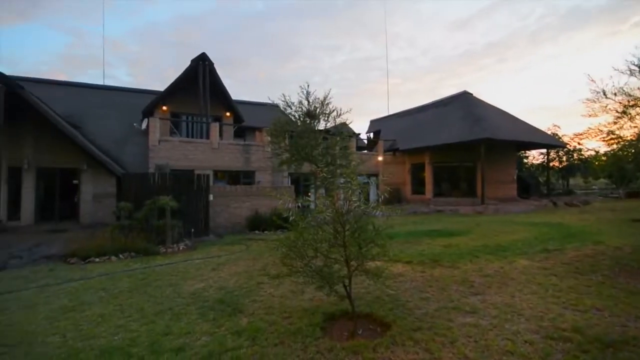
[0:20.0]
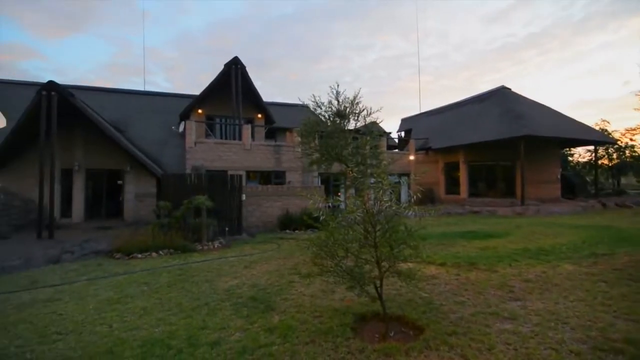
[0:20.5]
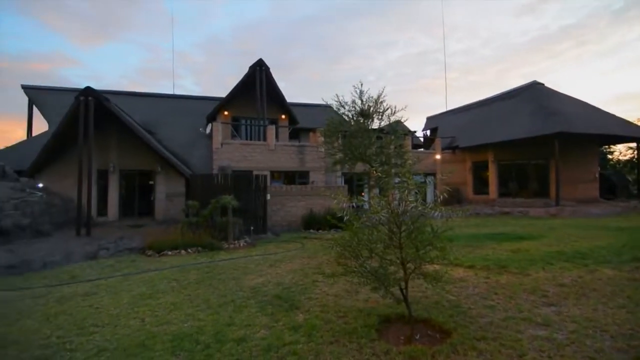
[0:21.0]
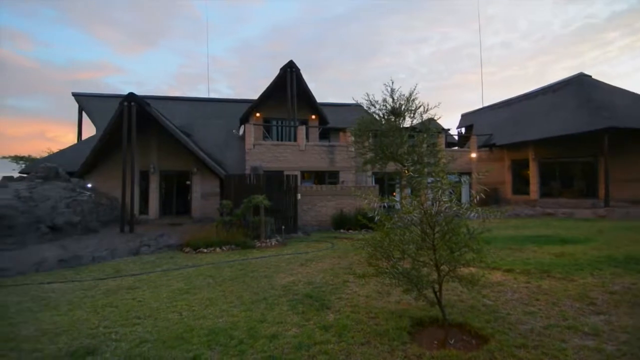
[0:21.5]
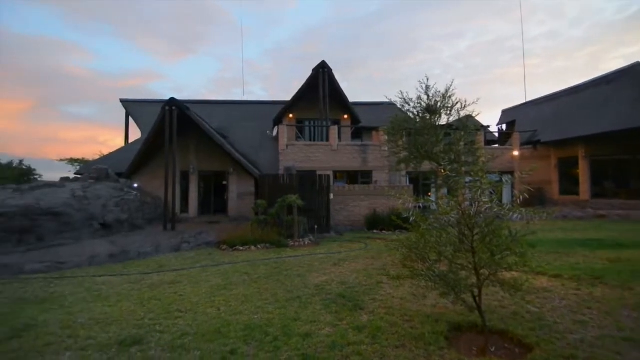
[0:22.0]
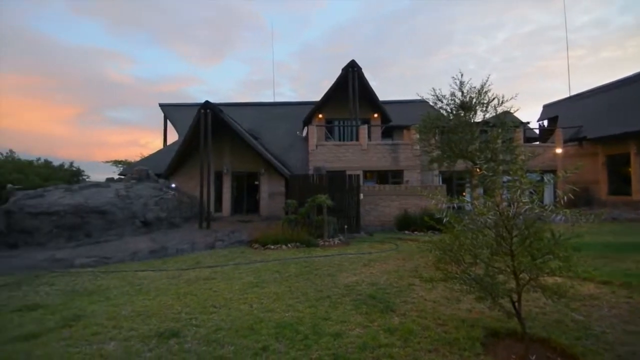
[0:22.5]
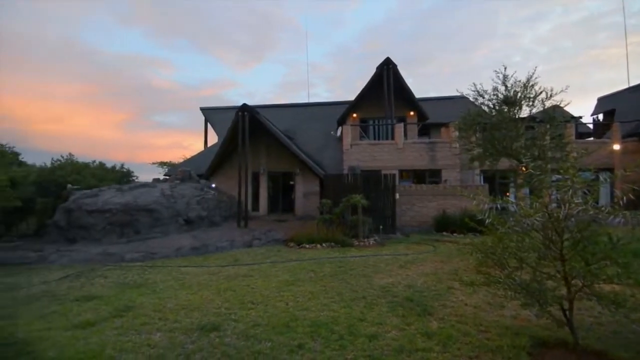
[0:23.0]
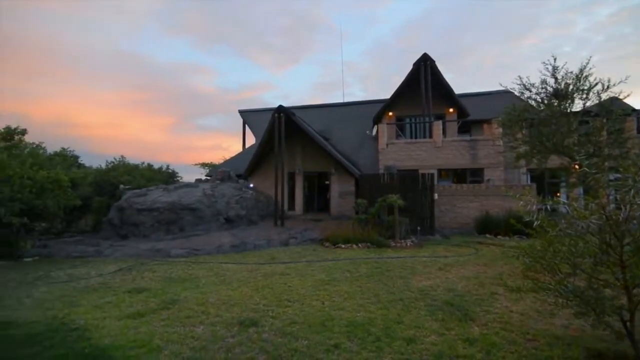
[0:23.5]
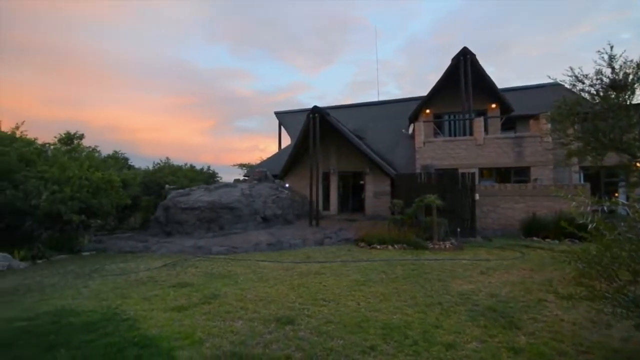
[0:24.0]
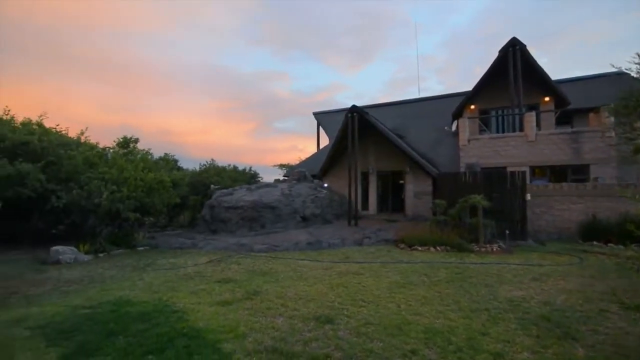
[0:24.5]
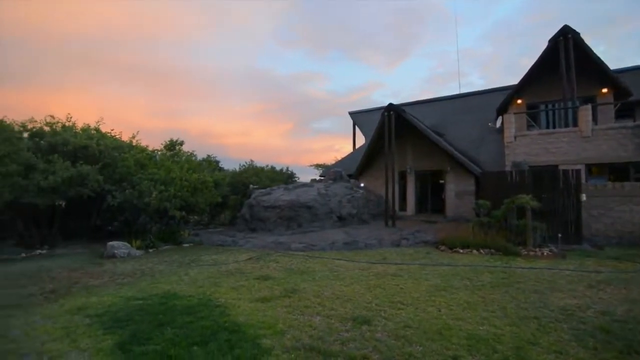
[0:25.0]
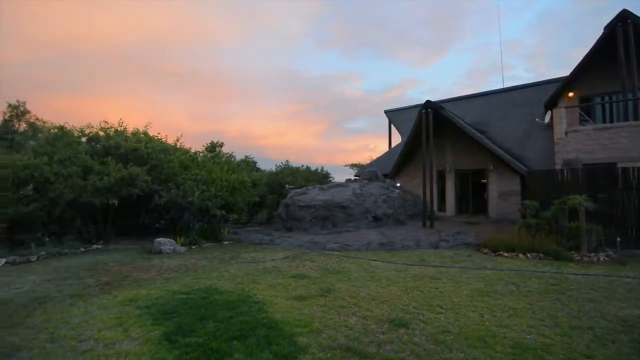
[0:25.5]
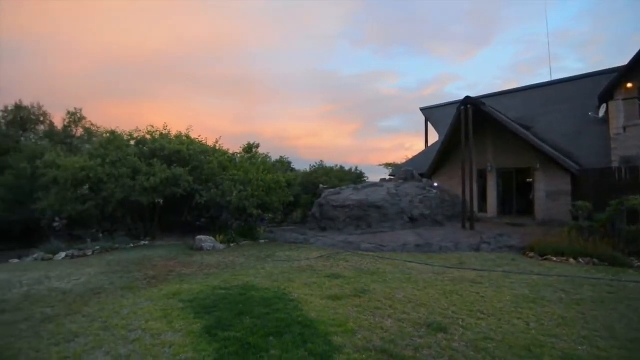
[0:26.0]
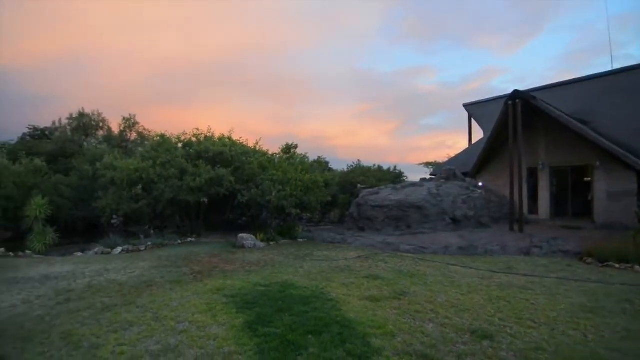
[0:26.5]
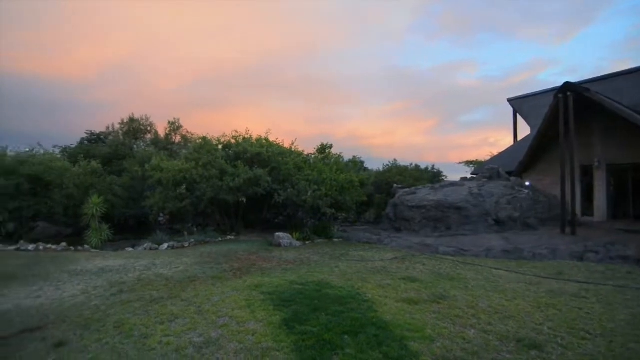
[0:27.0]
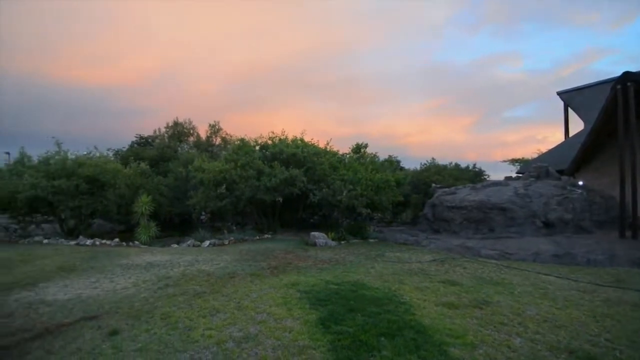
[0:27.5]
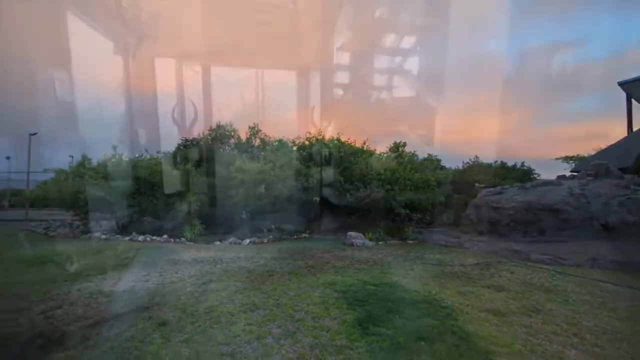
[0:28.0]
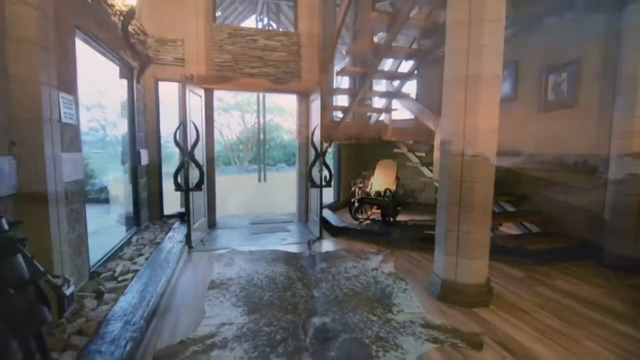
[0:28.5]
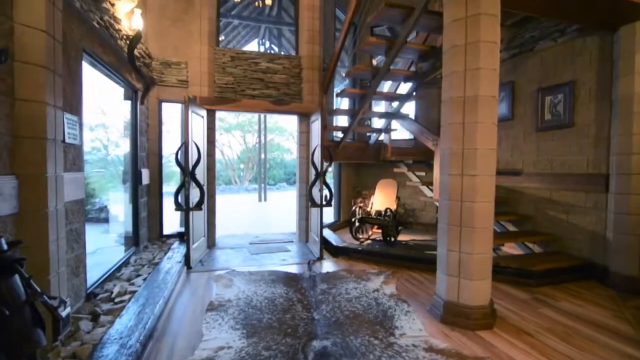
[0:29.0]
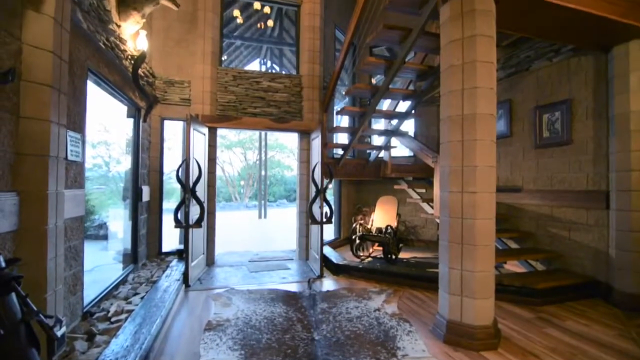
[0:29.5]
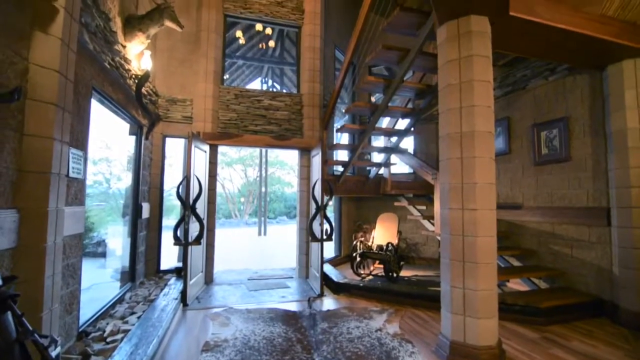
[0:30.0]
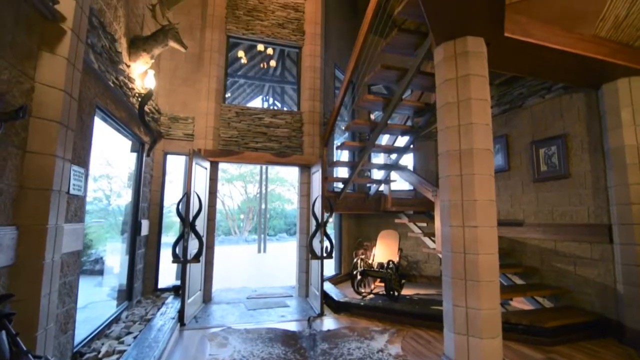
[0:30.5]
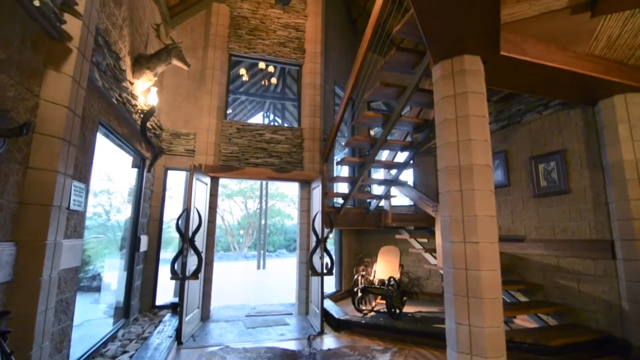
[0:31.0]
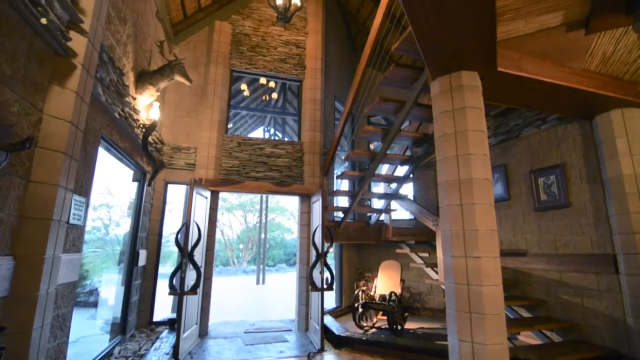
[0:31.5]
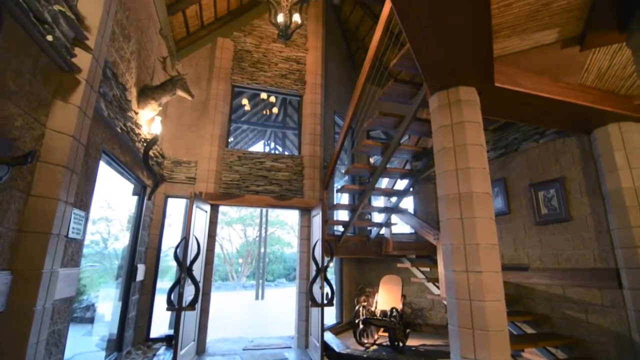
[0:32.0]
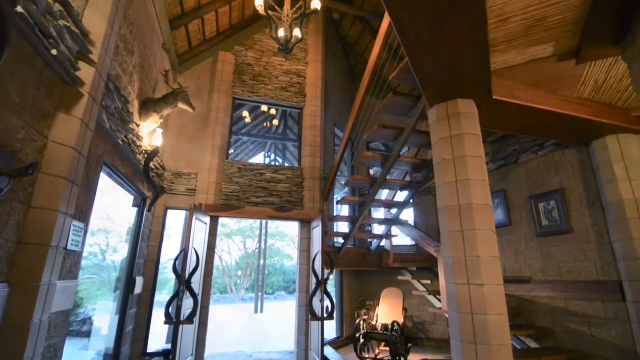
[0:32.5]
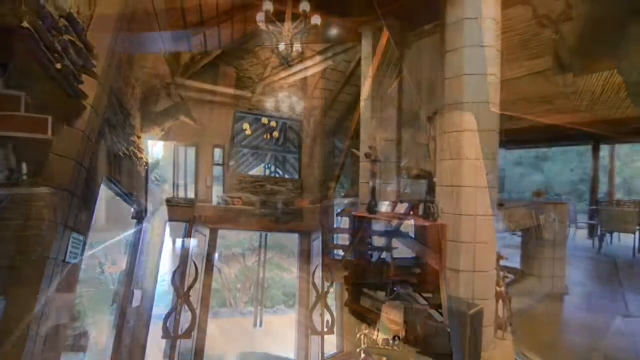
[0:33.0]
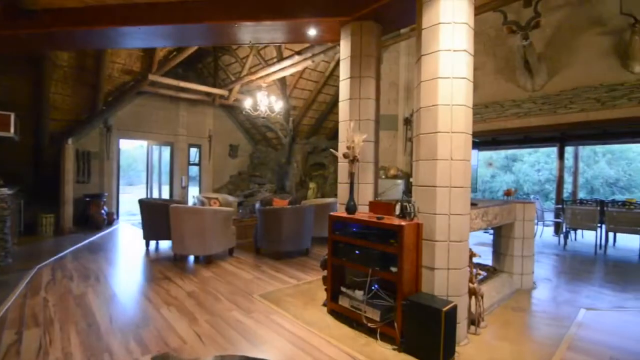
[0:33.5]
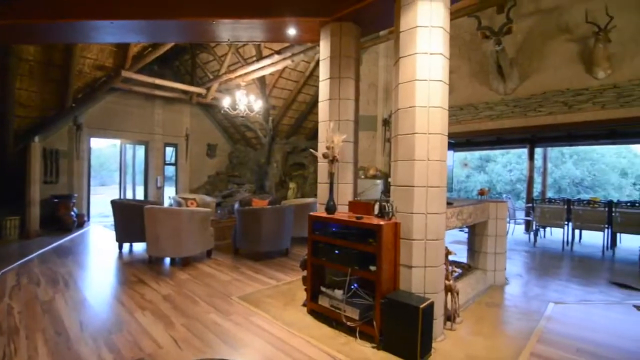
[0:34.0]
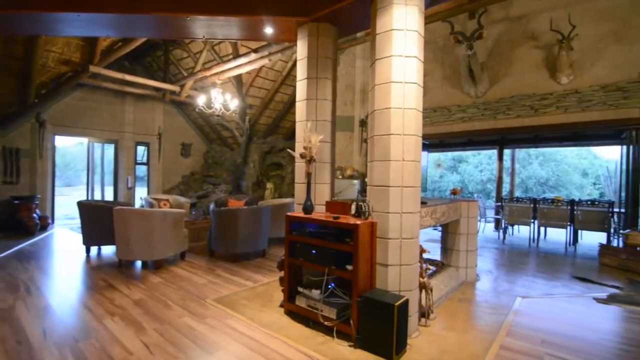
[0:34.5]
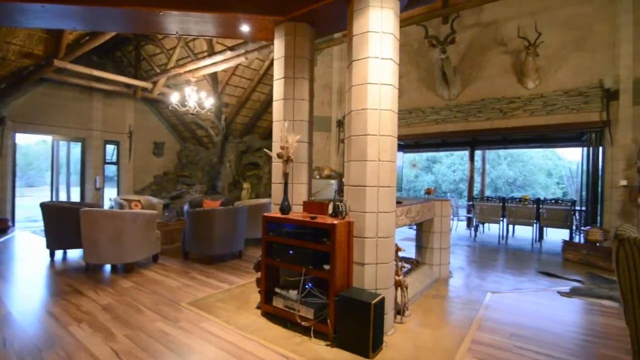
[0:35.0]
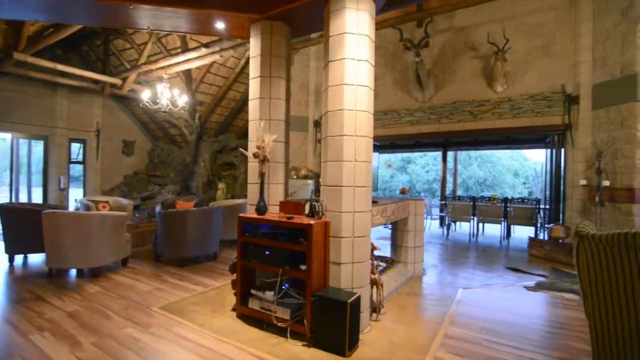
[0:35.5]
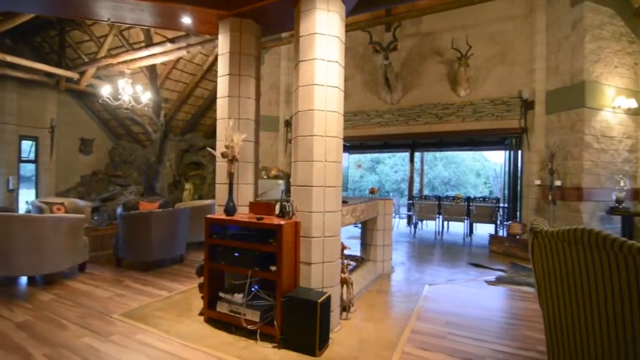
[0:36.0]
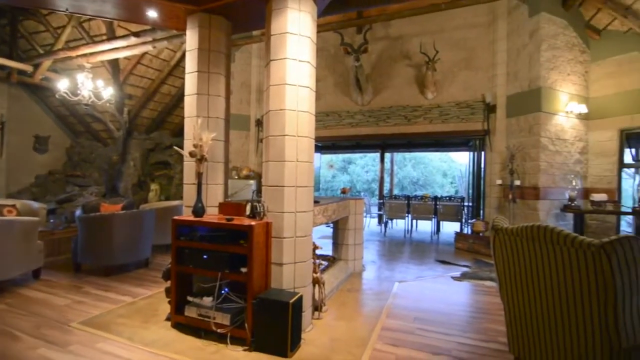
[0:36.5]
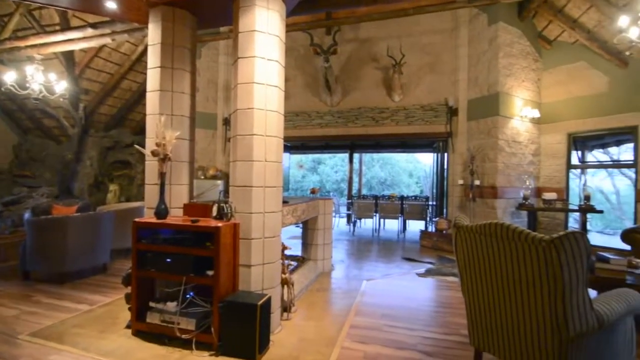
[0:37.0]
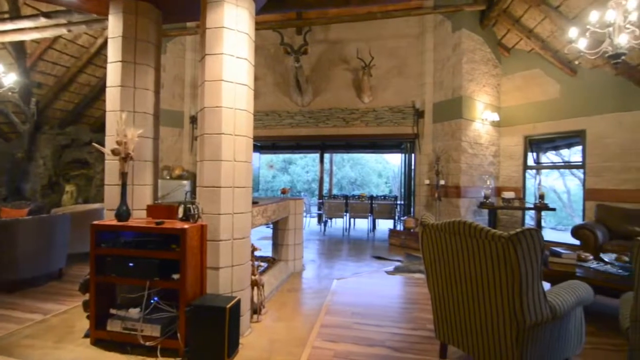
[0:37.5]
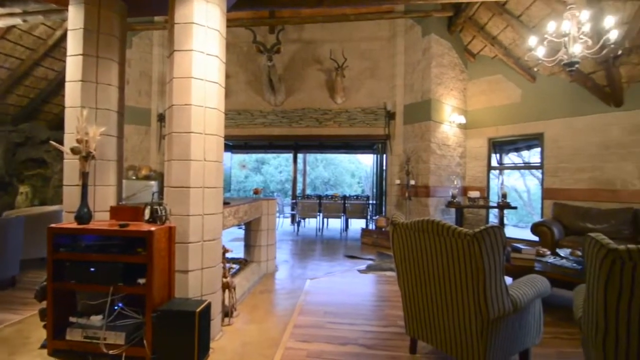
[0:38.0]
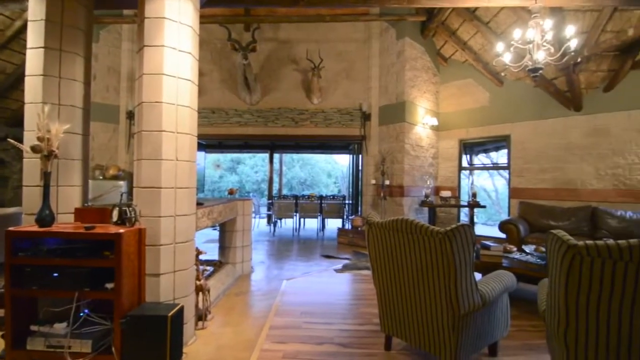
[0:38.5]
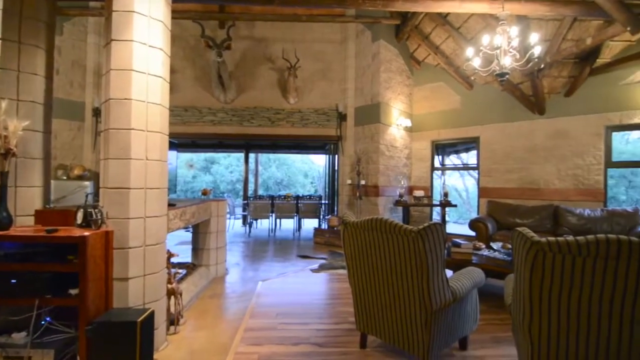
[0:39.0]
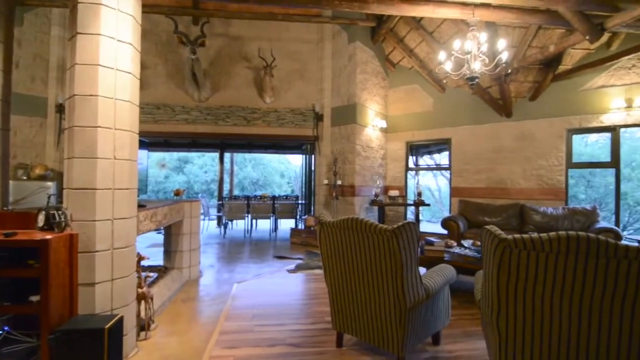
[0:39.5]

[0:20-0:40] The house looks abandoned: the grass is overgrown, and soil and sand have been washed up. The view moves inside, where the lights are on. The interior appears furnished and very nice, in contrast to the overgrown, poorly kept exterior. Inside looks untouched, as if somebody still lives there, while the exterior looks like it needs work, as though something may have happened that made the people move out. All the furniture is there, there are animals on the wall, and the lights are all on.